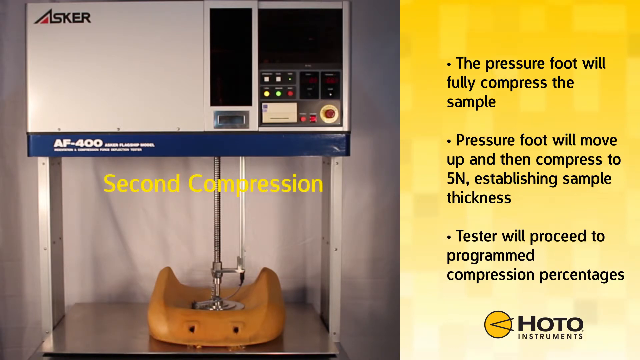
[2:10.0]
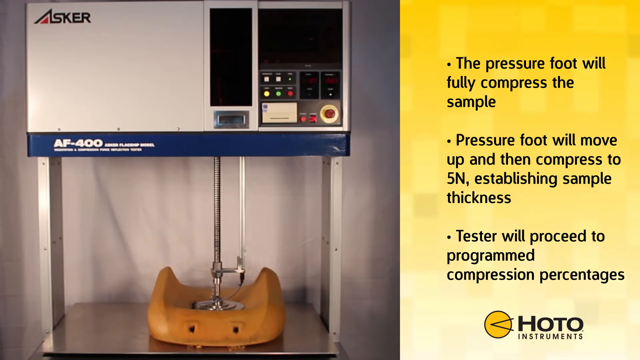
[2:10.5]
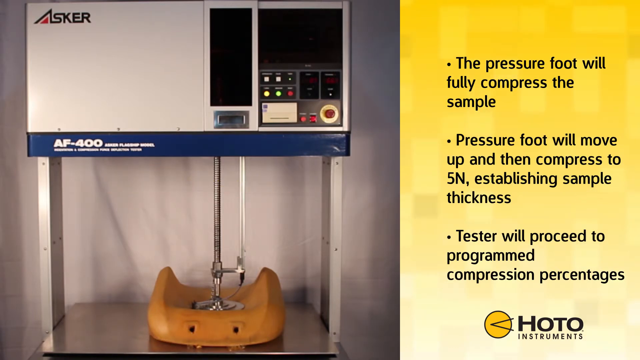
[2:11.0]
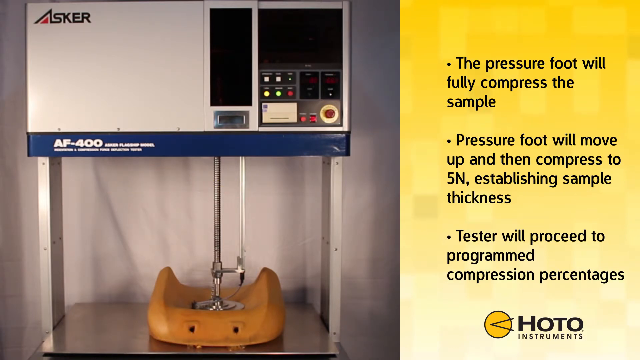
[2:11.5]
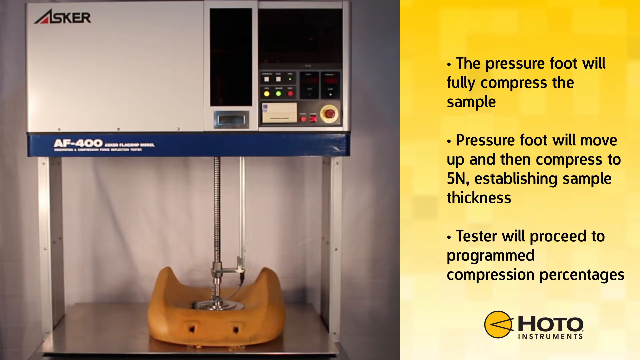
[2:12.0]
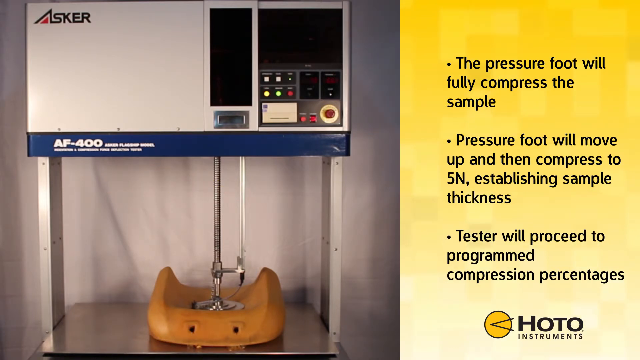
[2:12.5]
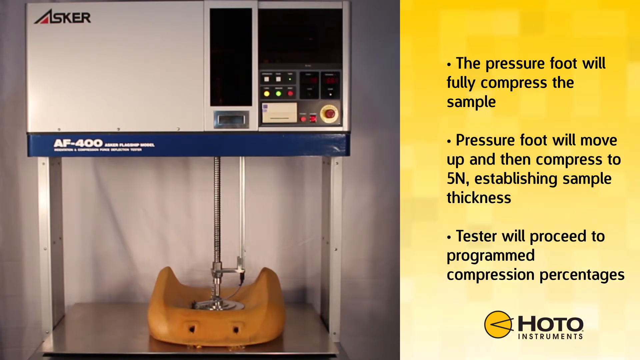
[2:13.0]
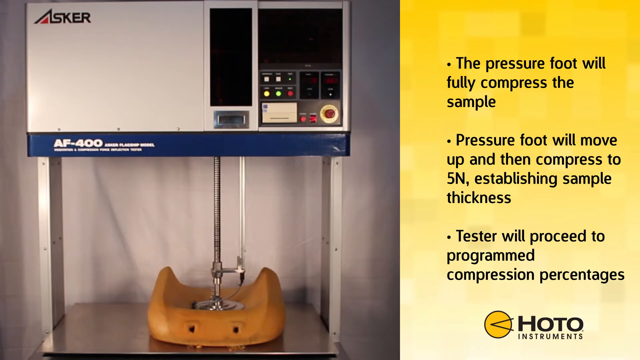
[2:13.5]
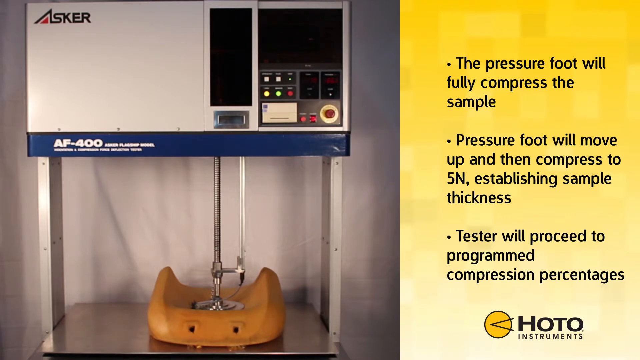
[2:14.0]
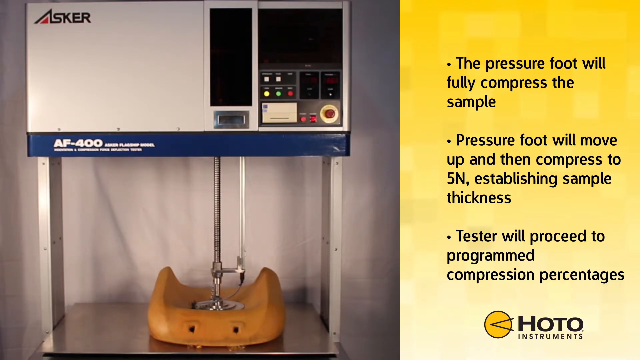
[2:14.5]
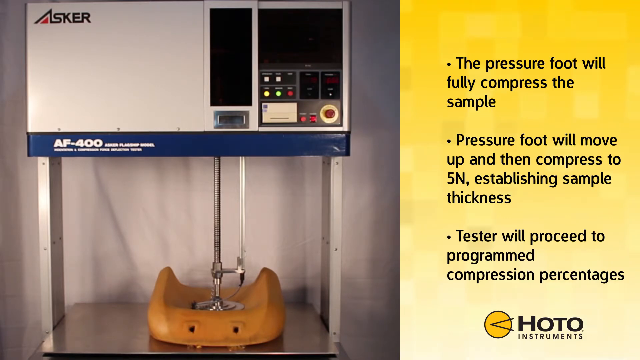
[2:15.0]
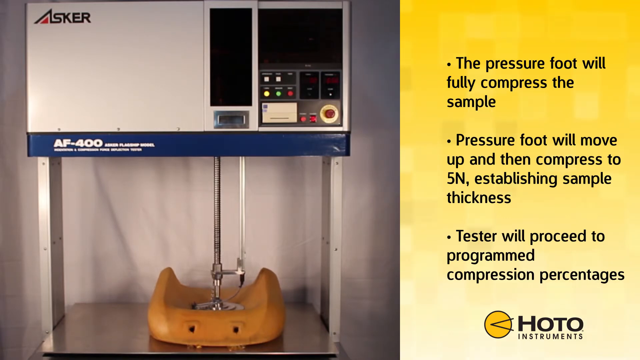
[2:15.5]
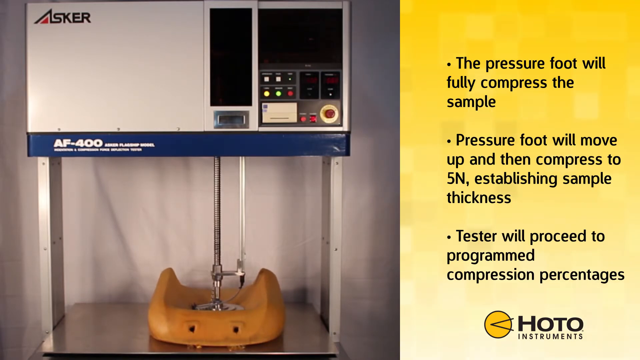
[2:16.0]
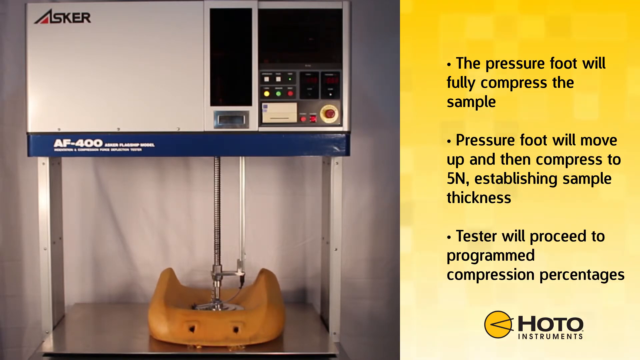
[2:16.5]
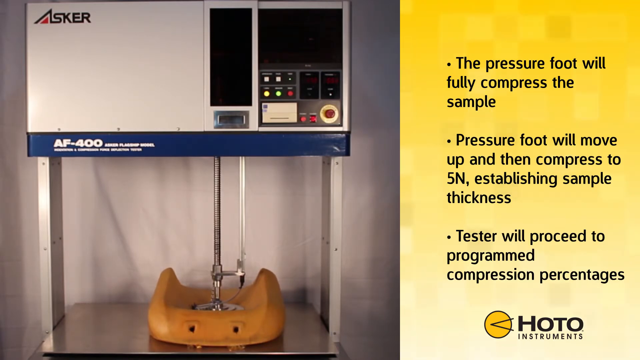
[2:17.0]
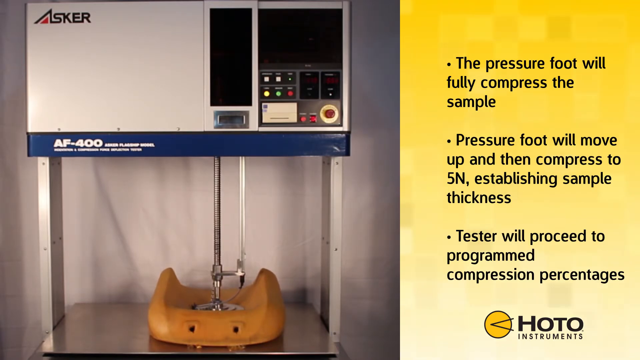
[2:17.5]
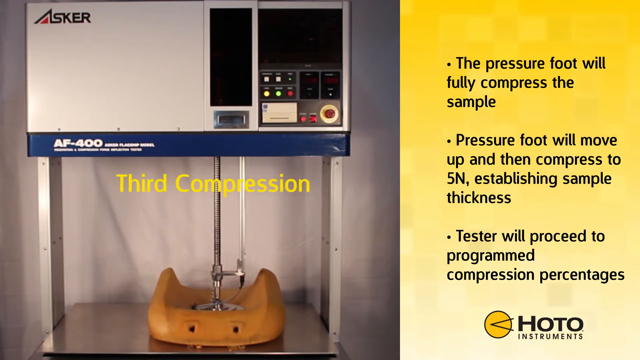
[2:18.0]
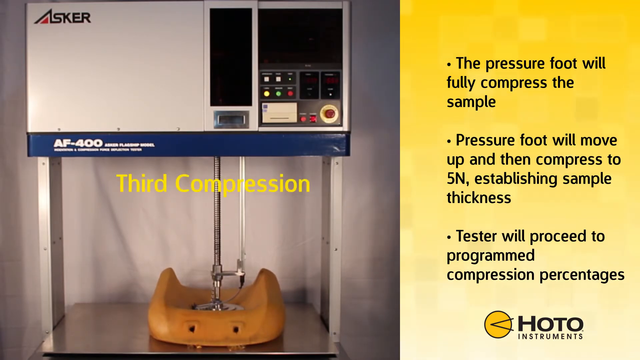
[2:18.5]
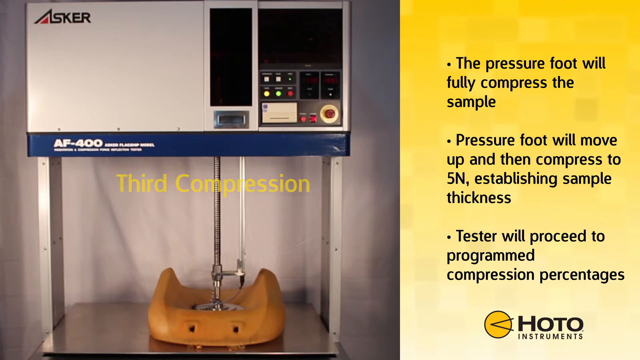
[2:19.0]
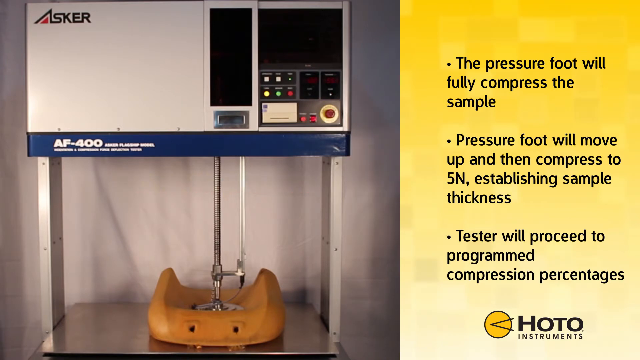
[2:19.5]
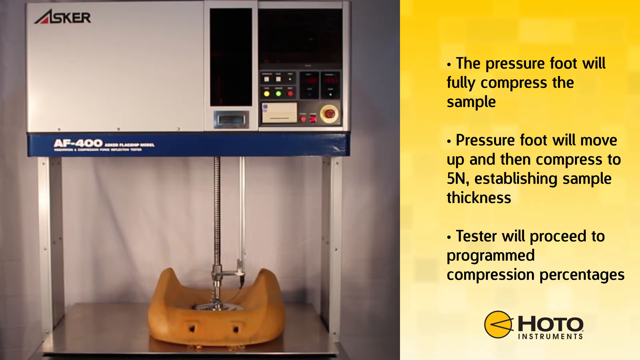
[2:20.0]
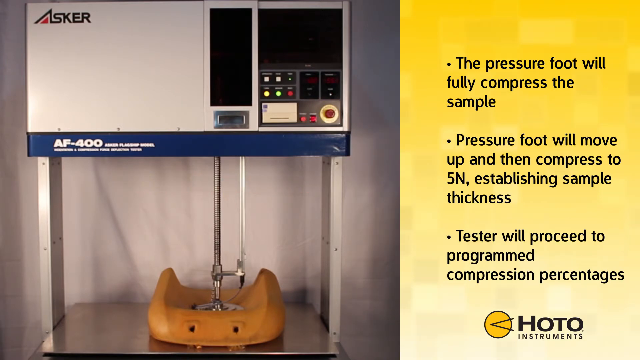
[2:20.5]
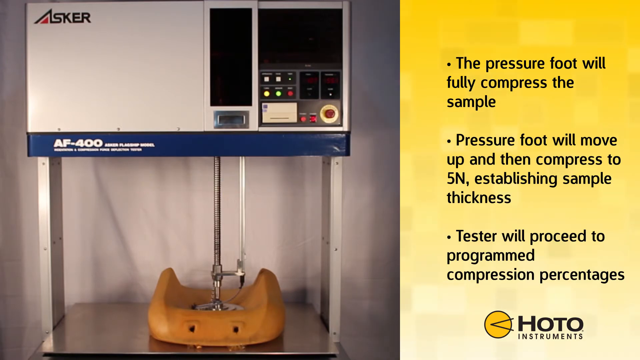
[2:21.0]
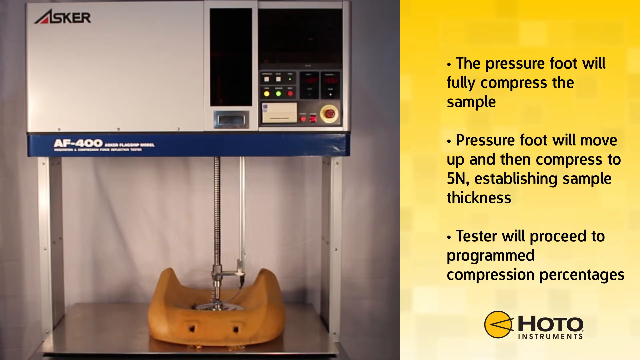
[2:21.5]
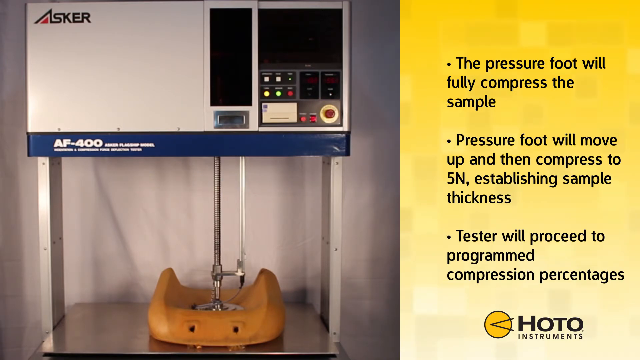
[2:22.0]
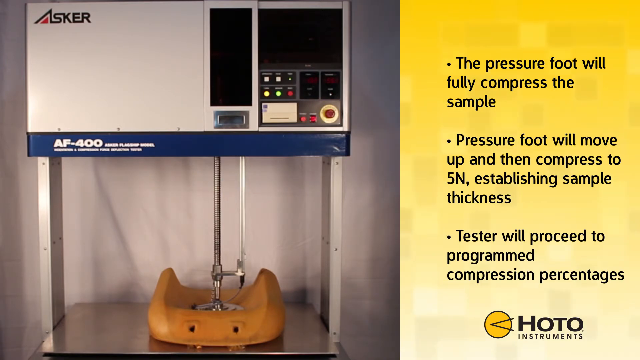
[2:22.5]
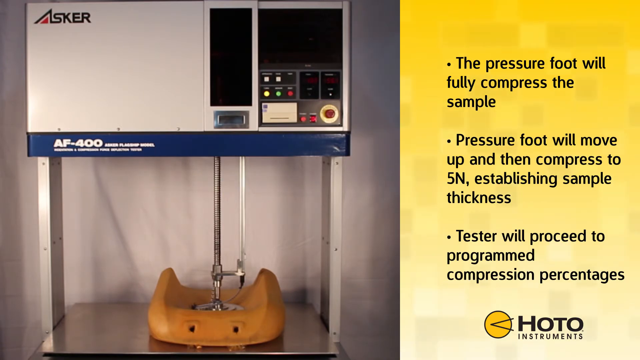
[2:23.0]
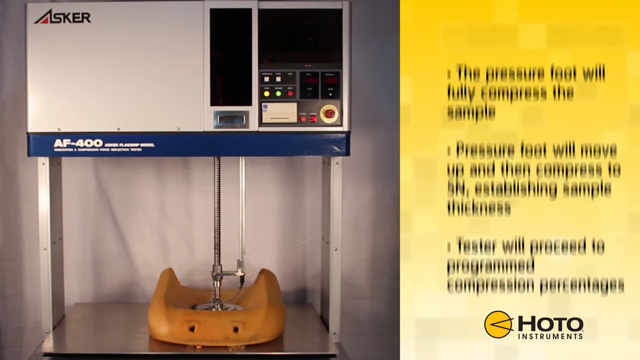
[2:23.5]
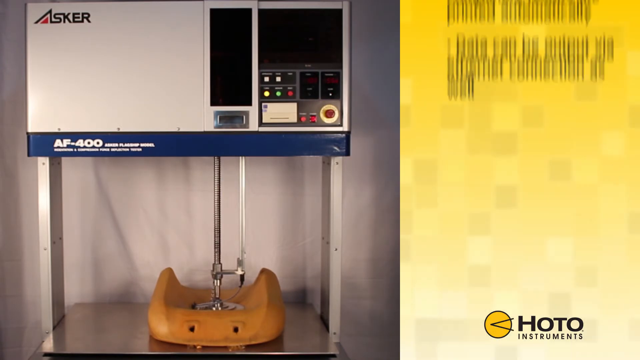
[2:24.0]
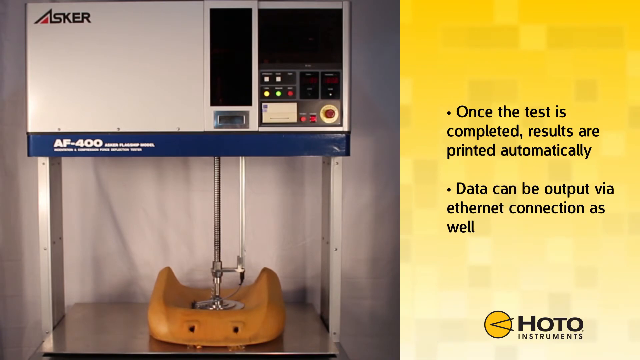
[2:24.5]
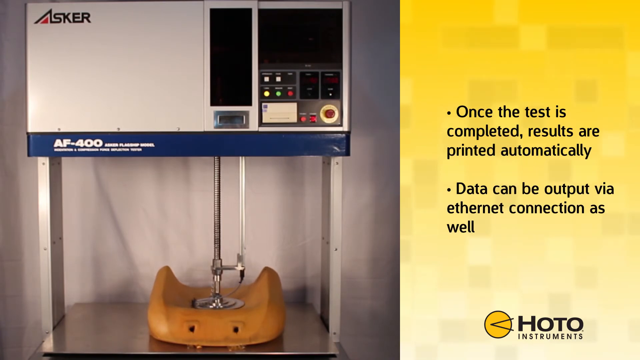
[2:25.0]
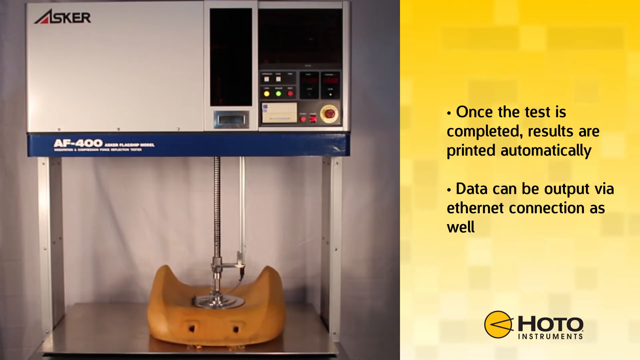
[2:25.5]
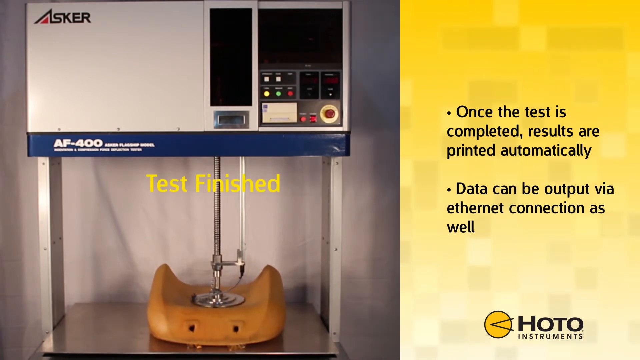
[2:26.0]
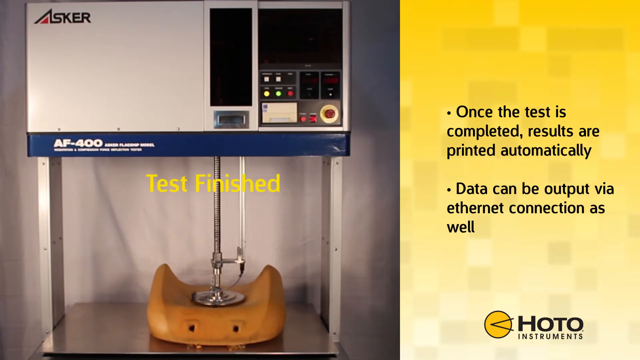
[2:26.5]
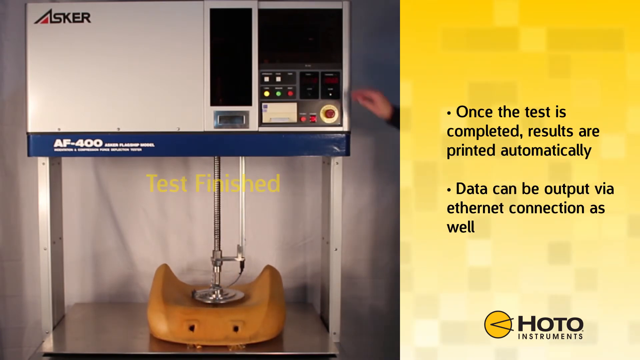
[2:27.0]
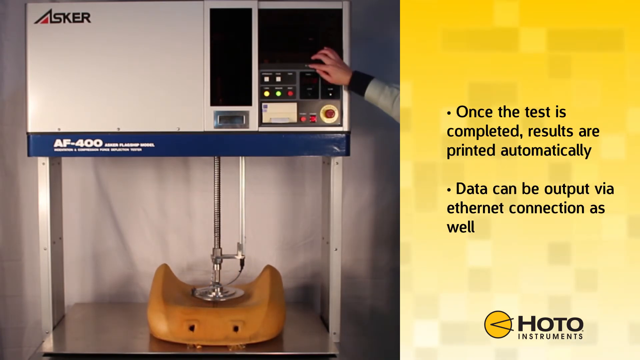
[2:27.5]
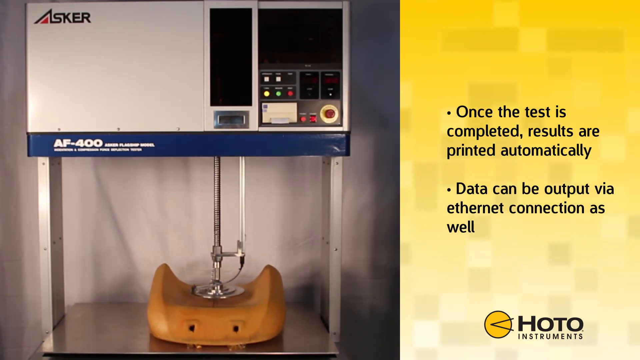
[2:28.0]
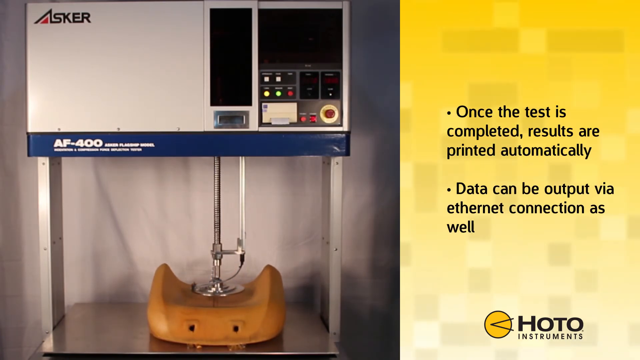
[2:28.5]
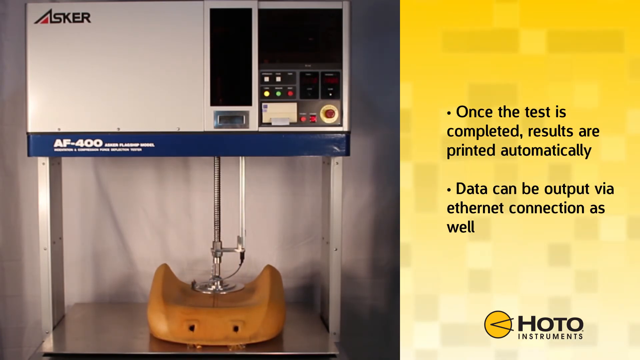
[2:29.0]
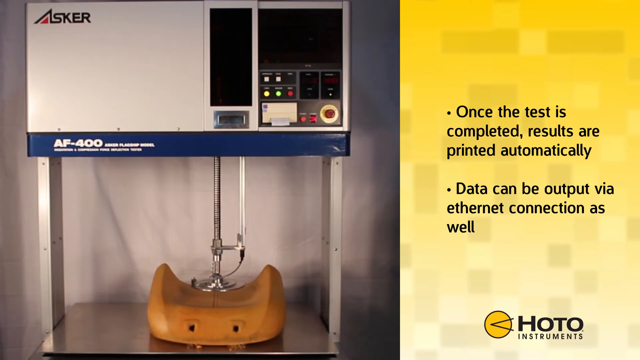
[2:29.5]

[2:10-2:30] During the second compression test, the arm gently pushes down. "Third compression" appears and the arm gently pushes down again. The screen on the right changes to new bullet points stating that the test is finished, and little happens on the machine. On the right, a new set of two data points appears: "once the test is completed, results are printed automatically" and "data can be output via ethernet connection". A black-grayish band at the bottom grays out part of the video, making the arm a little tricky to see.